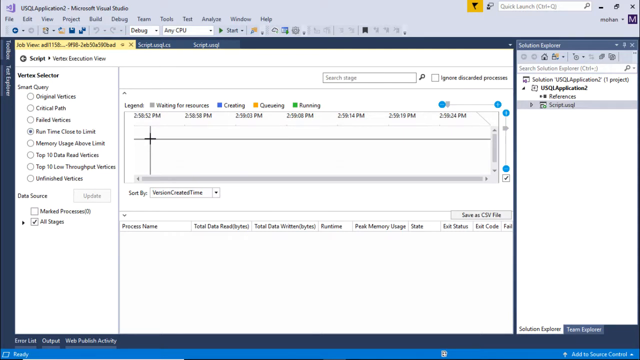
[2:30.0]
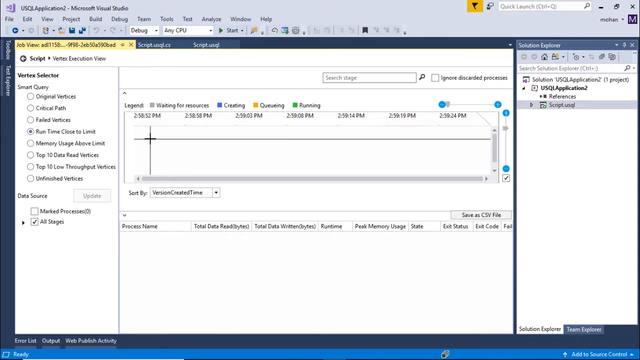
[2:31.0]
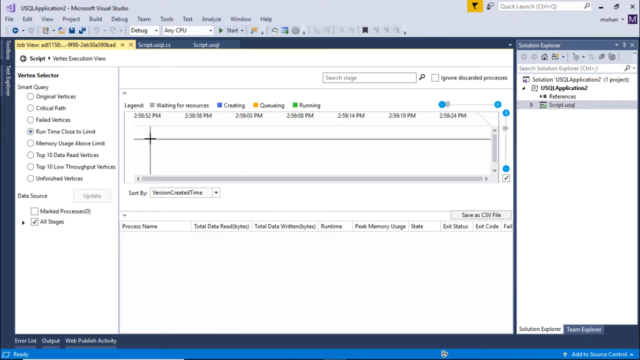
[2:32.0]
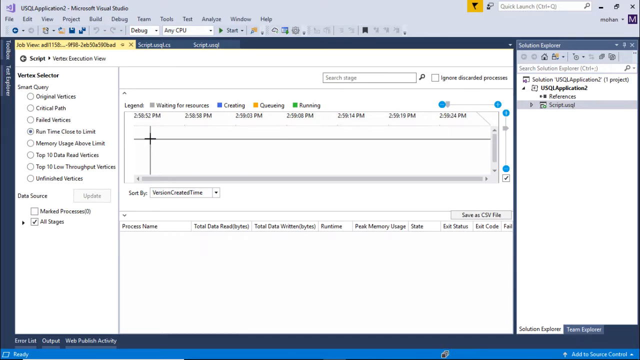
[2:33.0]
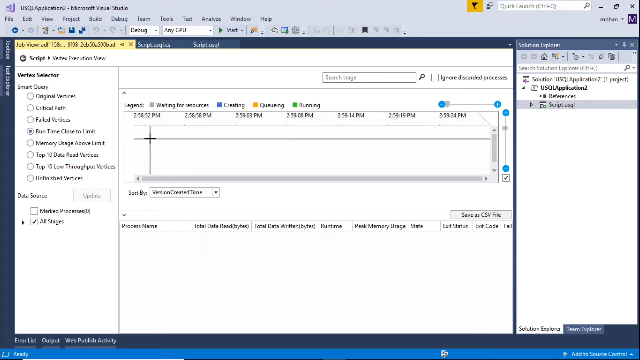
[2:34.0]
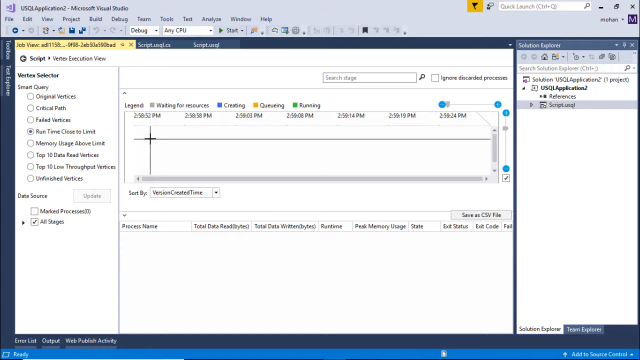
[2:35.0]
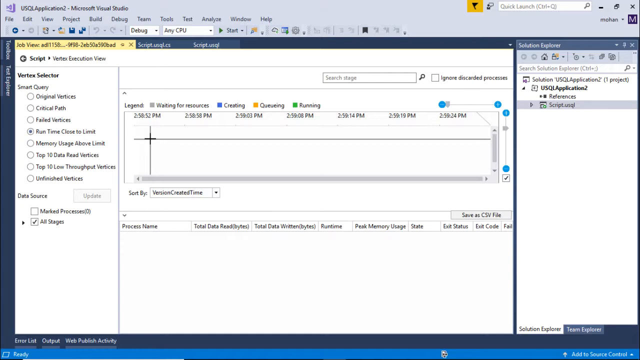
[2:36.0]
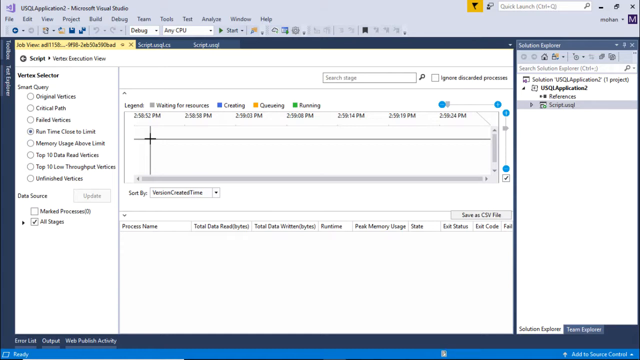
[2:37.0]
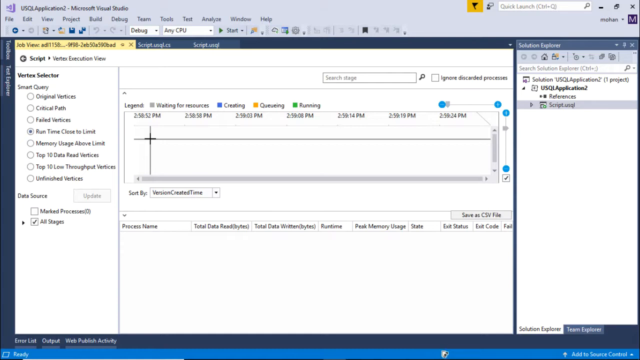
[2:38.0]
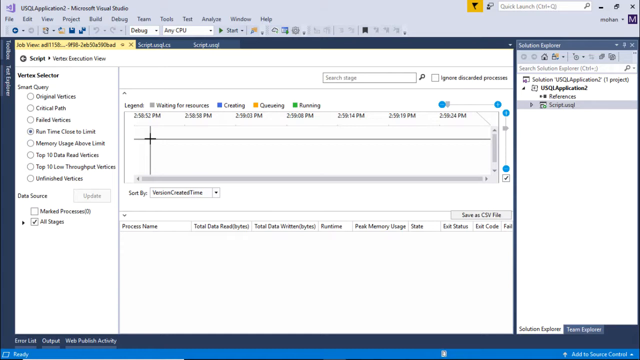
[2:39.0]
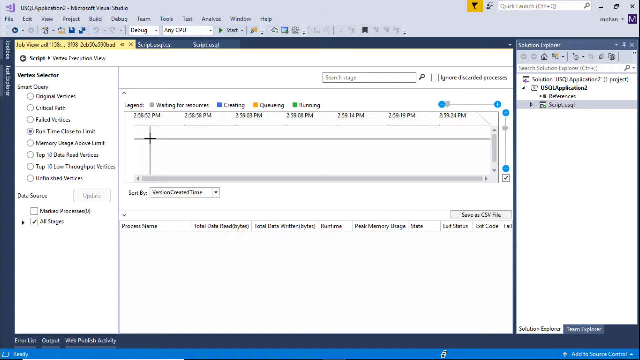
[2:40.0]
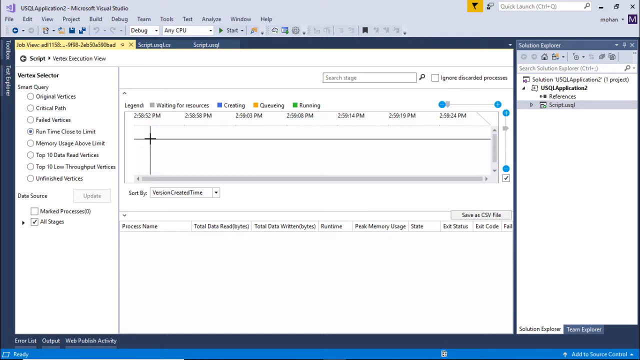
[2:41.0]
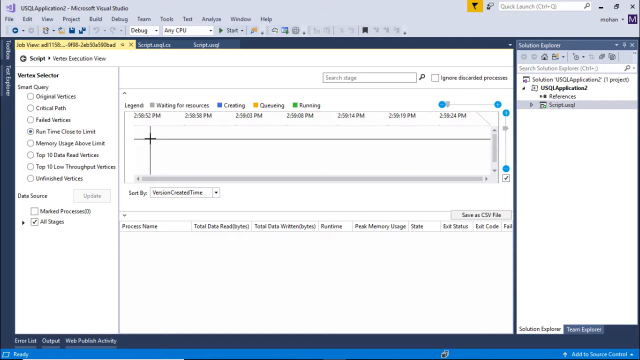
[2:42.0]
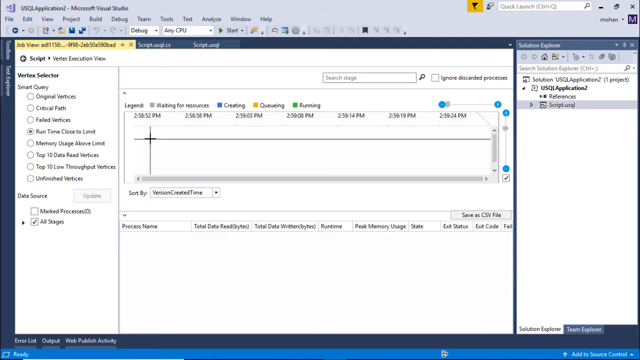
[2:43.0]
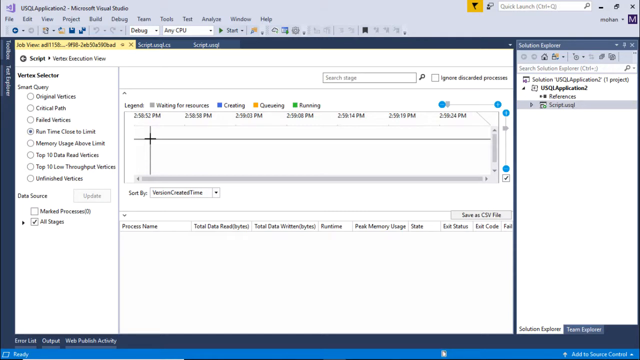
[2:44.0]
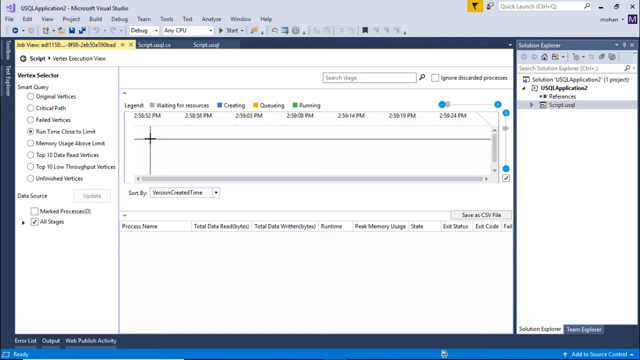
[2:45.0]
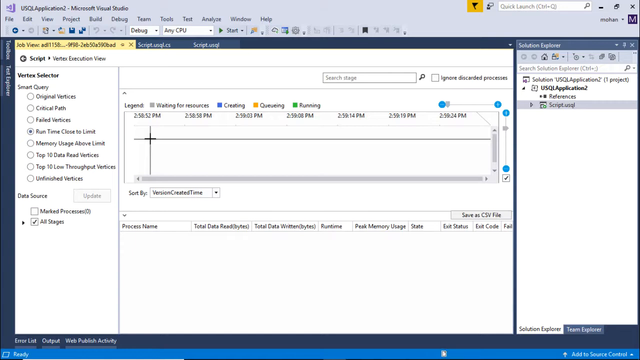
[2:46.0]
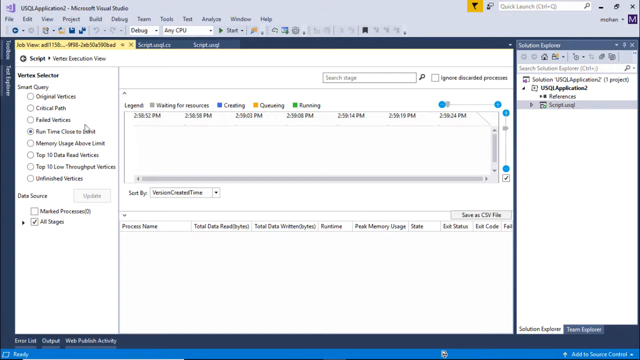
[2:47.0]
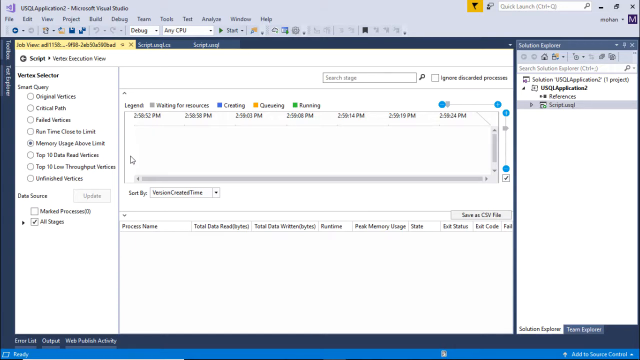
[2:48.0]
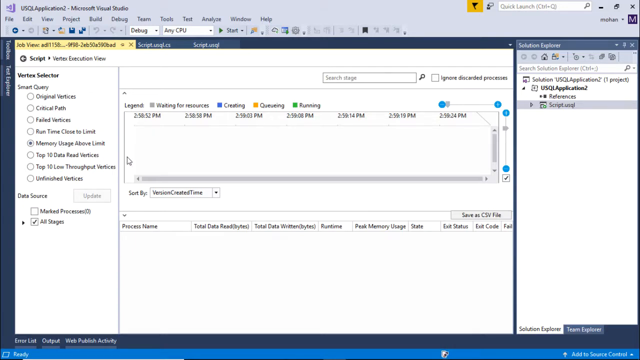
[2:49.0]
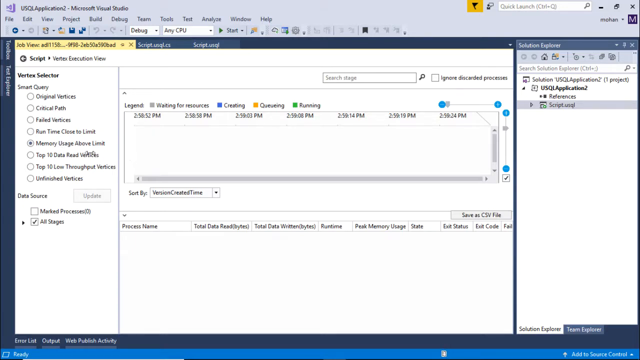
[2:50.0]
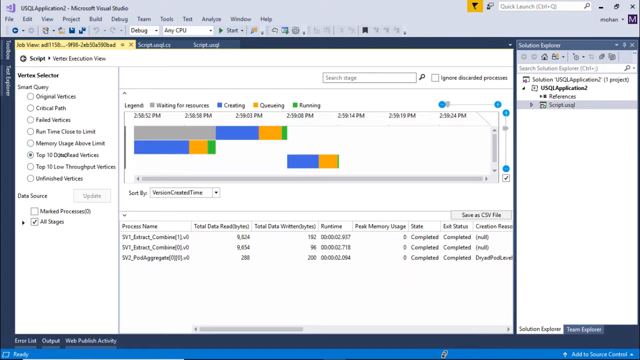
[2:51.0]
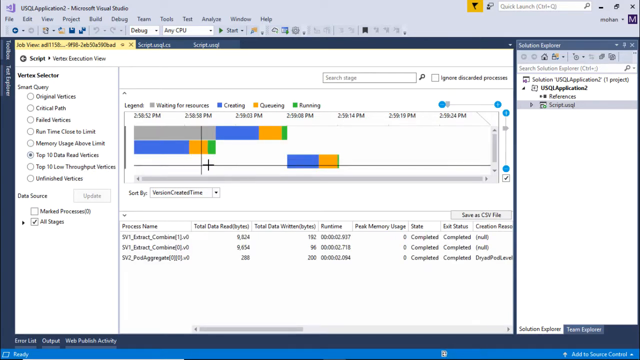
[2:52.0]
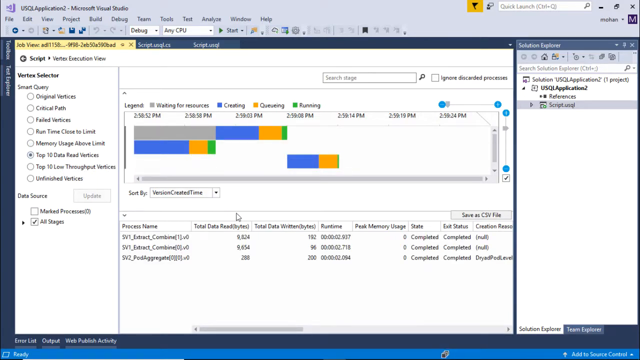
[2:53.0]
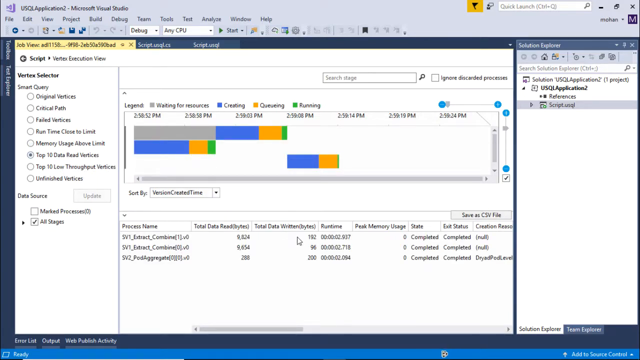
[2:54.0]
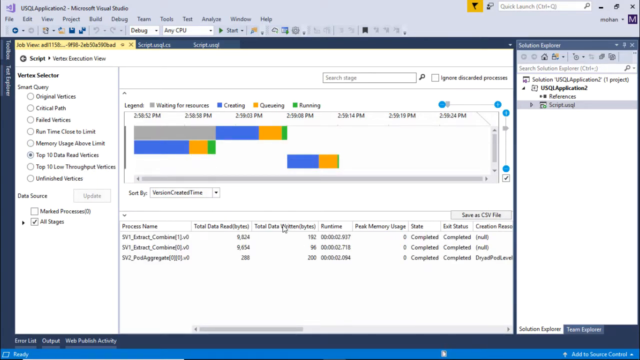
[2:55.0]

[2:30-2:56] The shared screen has four distinct sections: the leftmost vertical rectangle with text and bubble boxes for selections, the center graph area, a description of what is displayed in the graph below it, and another vertical rectangle to the right with various illegible information. At first there is no movement on the screen. When movement begins, a crosshair within the graph area starts to move. The mouse then wiggles to draw attention and selects a different bubble, which changes the graph again. The mouse arrow then waves about the lower area with the descriptor of the graph, pointing out what is in the graph. The graph is legible, with lines of blue, orange and green information in various placements. All of this appears to illustrate what the young man is teaching.